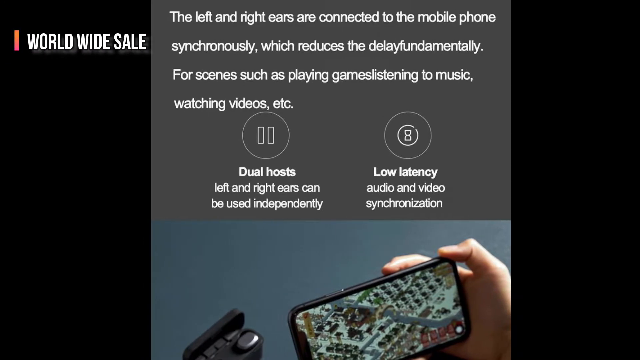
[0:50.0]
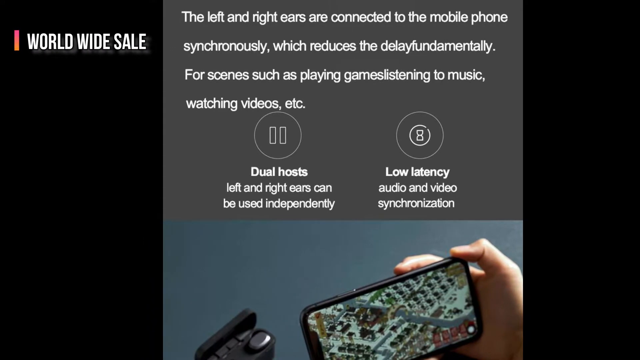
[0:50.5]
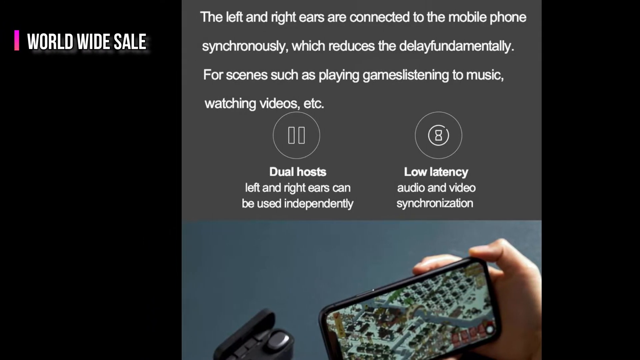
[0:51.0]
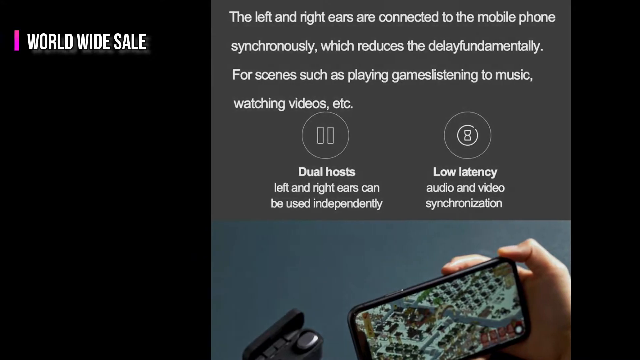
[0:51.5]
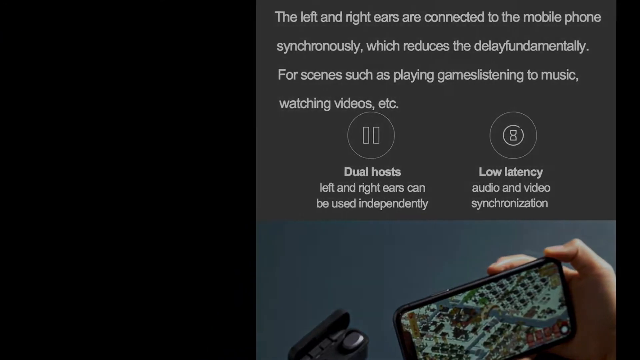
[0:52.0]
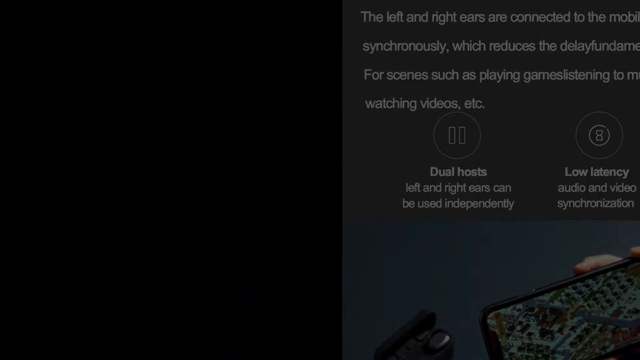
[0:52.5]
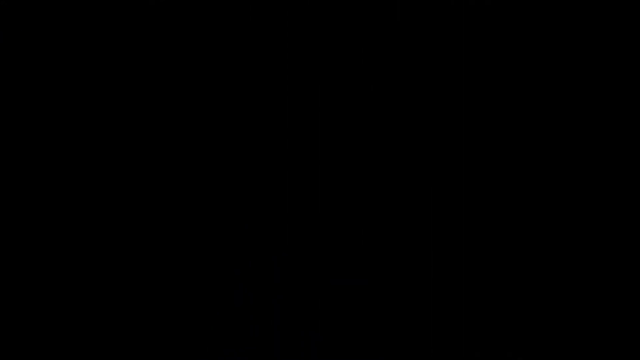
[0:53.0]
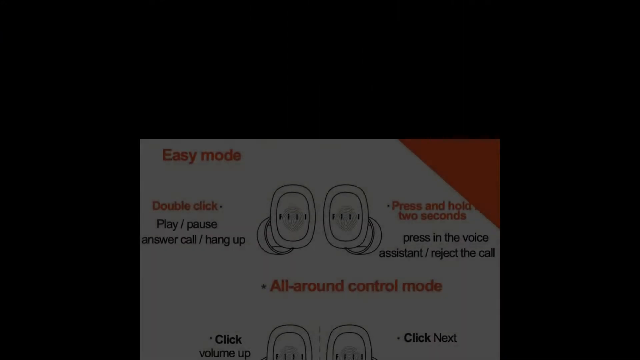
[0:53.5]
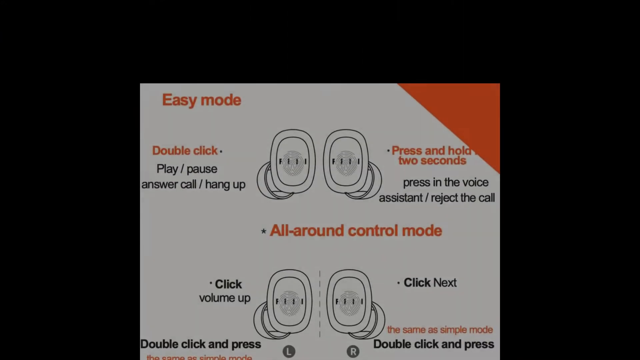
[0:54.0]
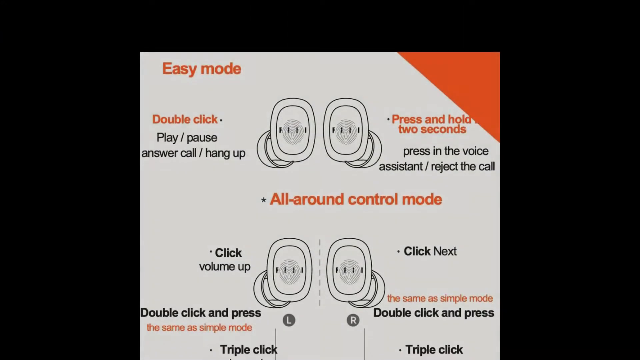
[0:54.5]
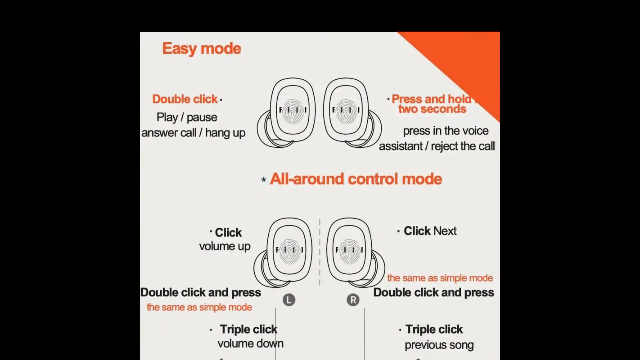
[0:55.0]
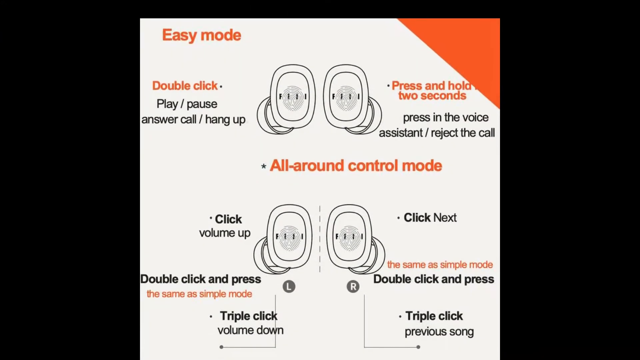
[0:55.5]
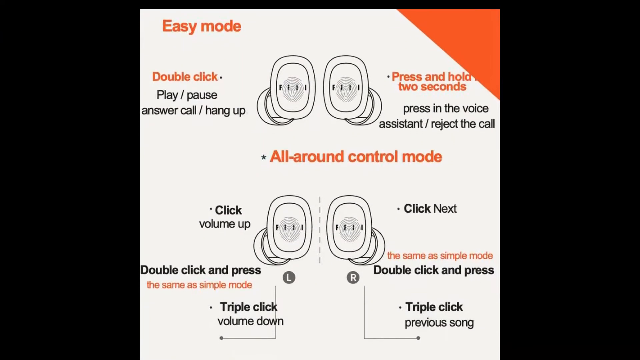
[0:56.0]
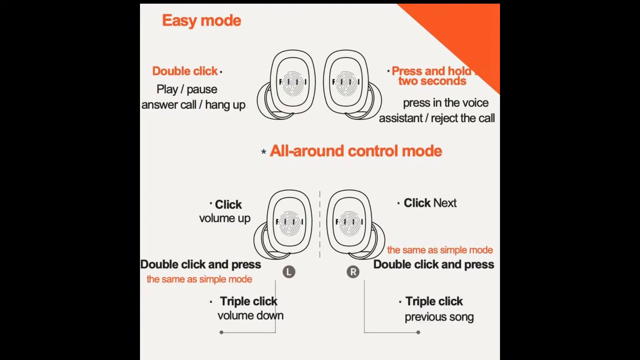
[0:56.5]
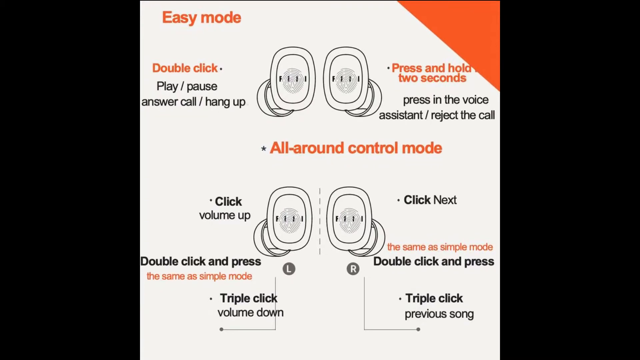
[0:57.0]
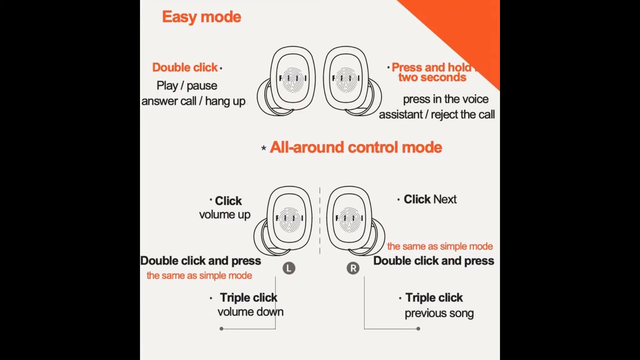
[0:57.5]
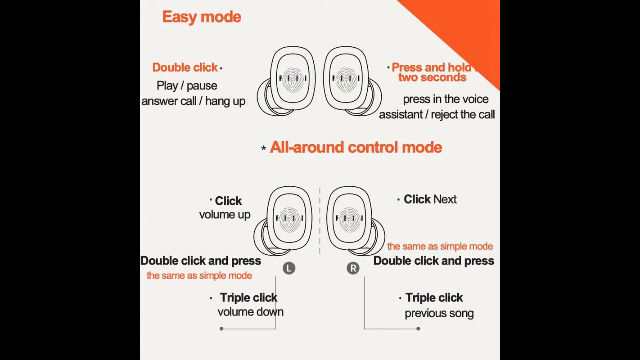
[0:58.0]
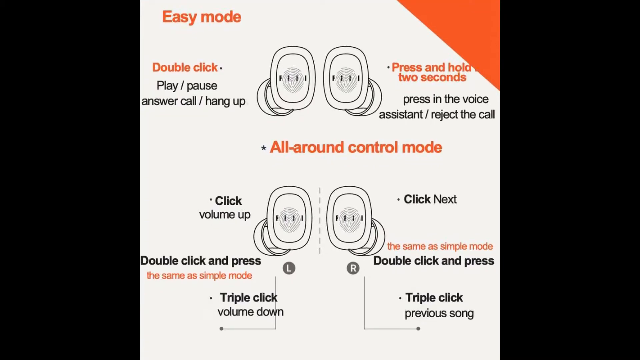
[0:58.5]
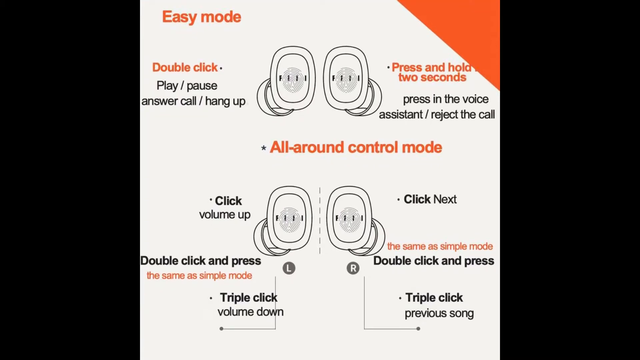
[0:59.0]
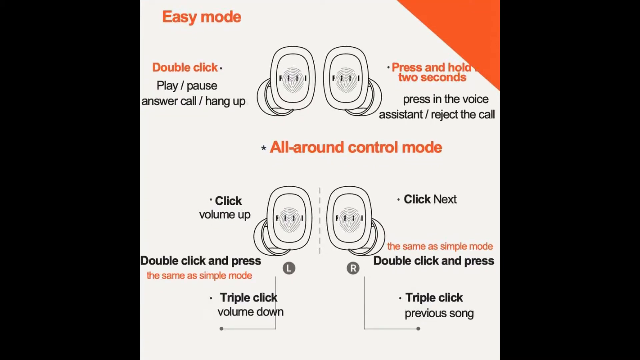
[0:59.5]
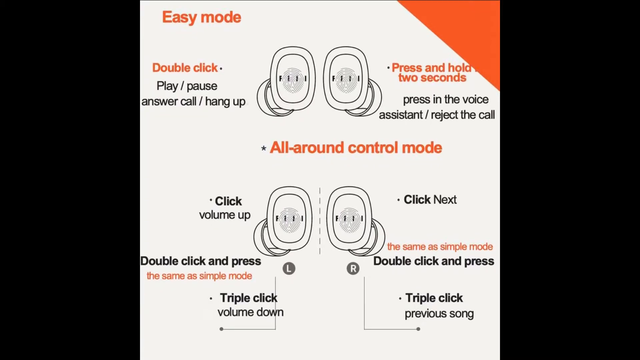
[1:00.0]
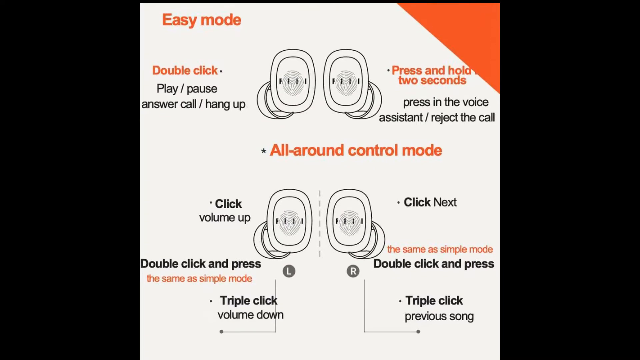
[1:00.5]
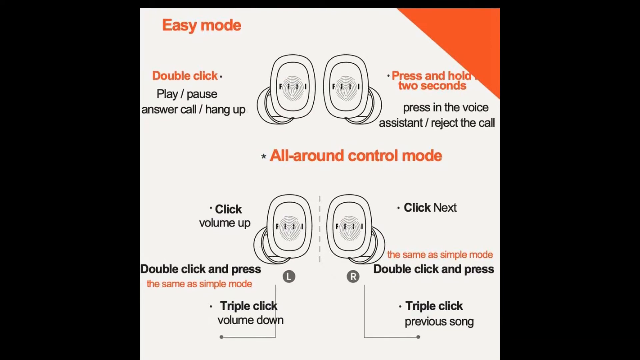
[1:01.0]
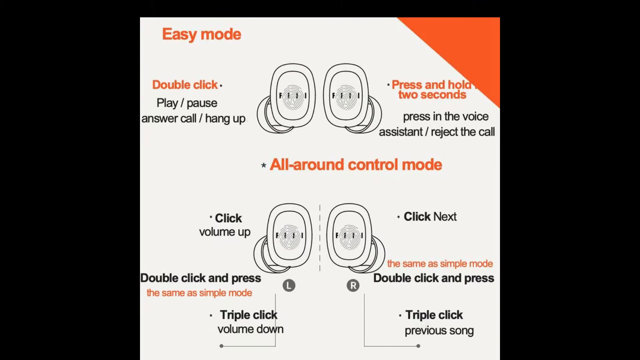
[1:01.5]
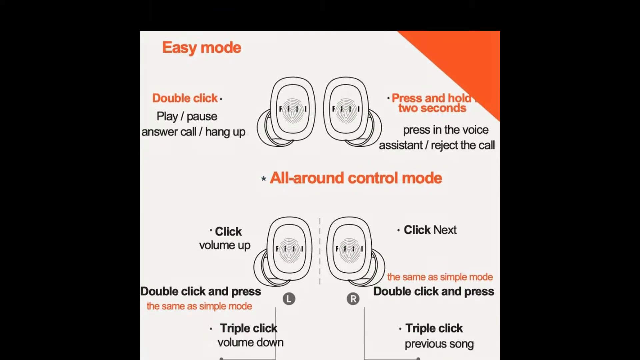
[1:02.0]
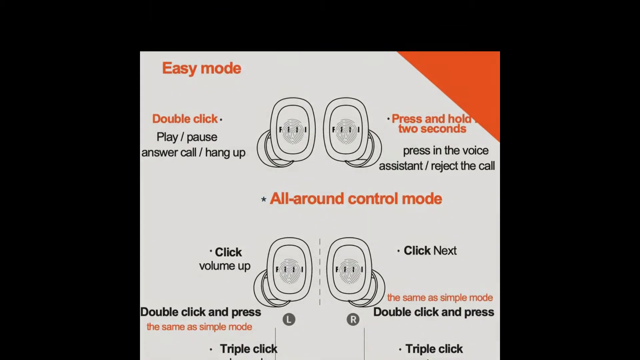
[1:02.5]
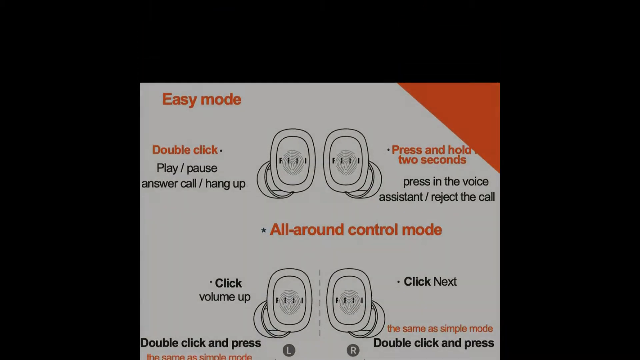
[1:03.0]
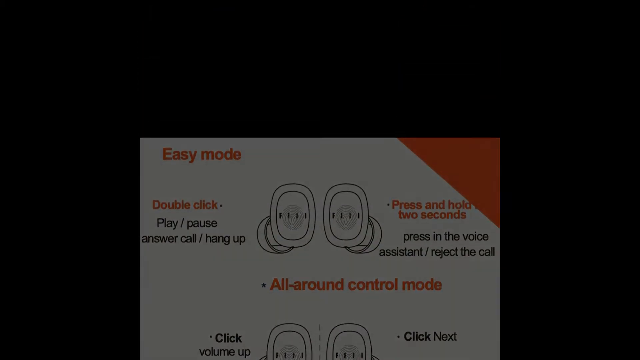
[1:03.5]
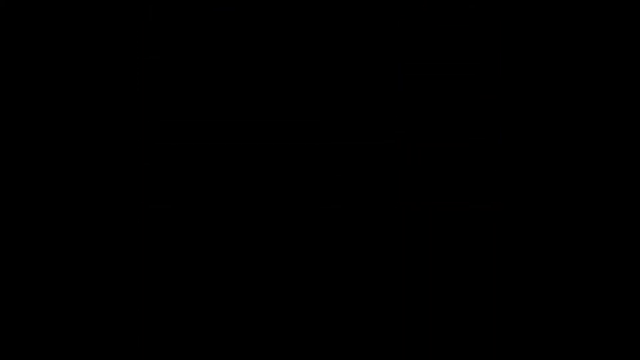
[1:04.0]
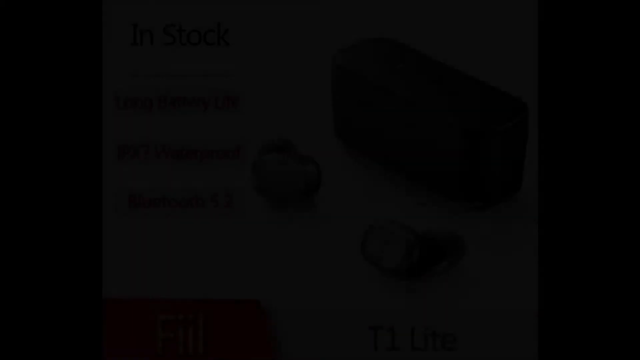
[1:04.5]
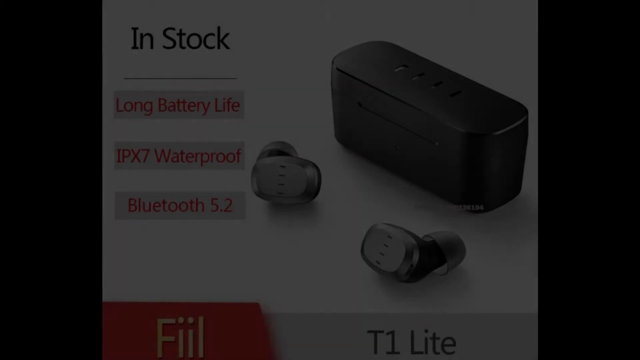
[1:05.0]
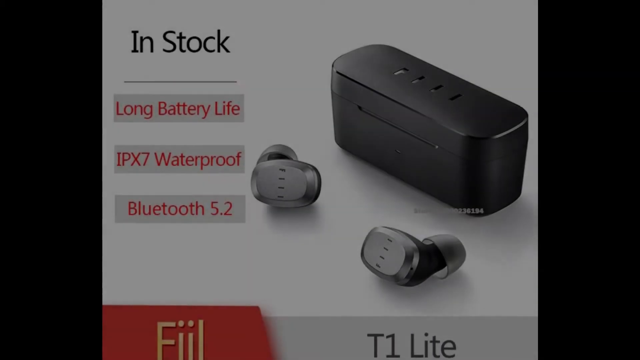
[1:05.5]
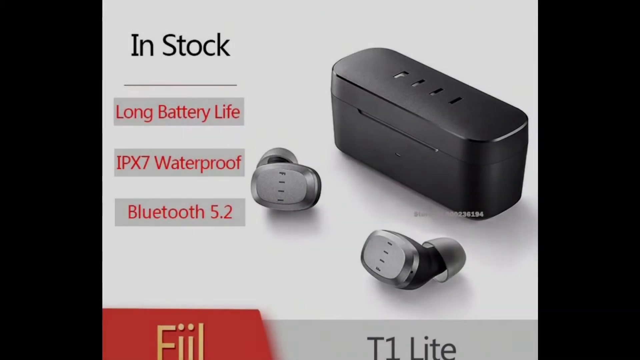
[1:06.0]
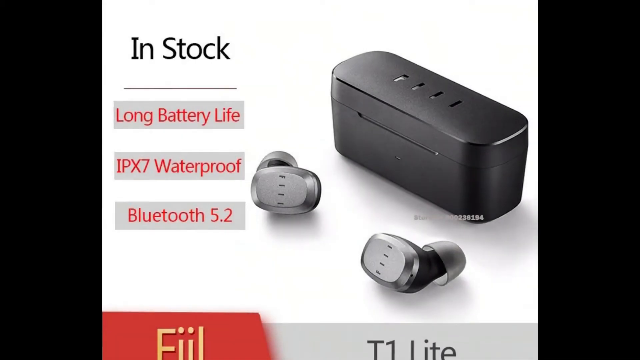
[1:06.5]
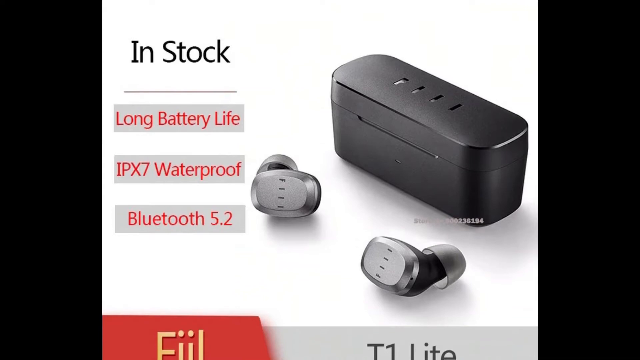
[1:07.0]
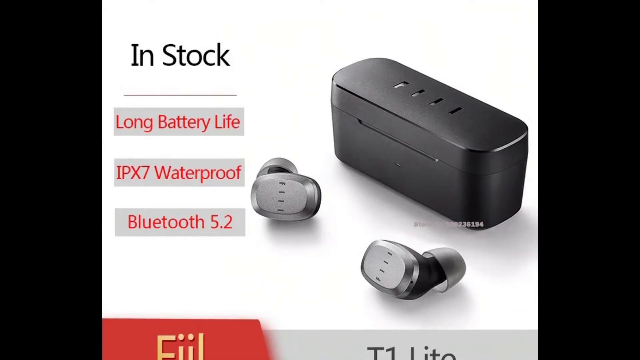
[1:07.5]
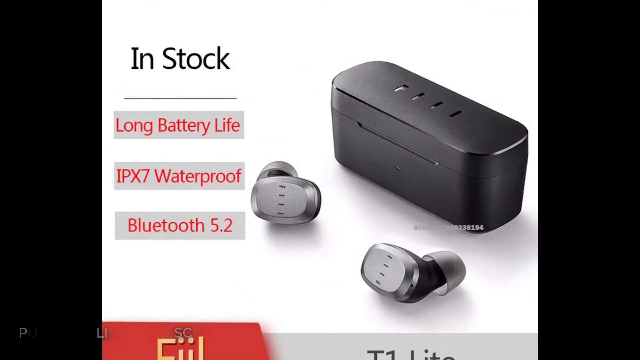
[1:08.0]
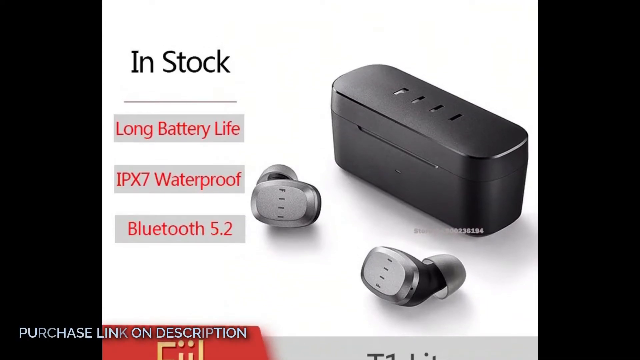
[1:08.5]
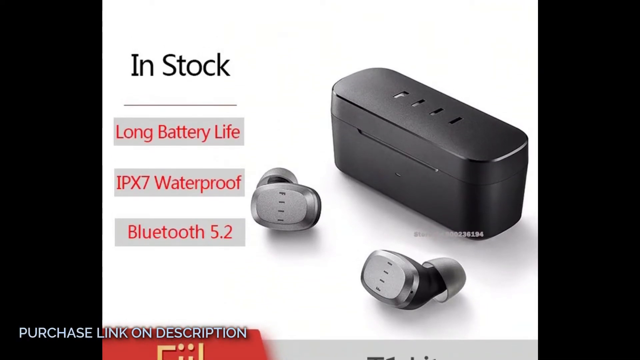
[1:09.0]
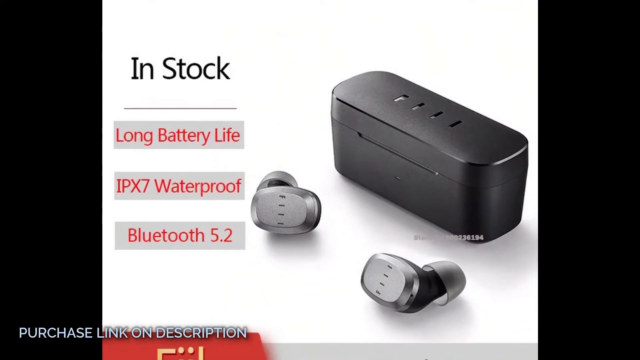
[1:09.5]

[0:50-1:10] The advert for the buds continues and then scrolls off to the right. A third advert arrives by scrolling upwards, describing a control mode in which double-clicking plays, pauses, answers or hangs up phone calls, and pressing and holding for two seconds activates the voice assistant or rejects calls. It also describes an all-around control mode that controls the volume by clicking, with a triple click turning the volume down or going back to a previous song. This information scrolls back down the page and fades out of view. Next, the text states that the item is in stock, has a long battery life, is IPX7 waterproof, has Bluetooth 5.2, and is the T1 Lite model produced by Fiil. Images of the buds and their carrying case appear alongside.